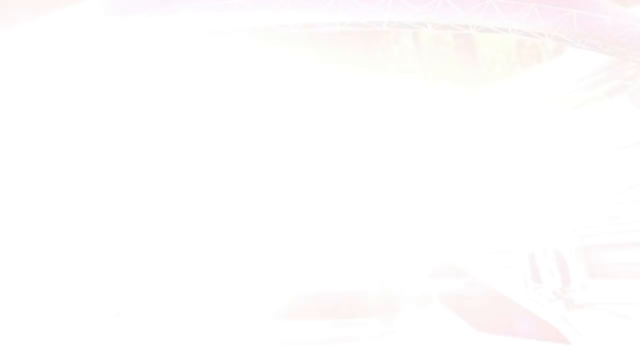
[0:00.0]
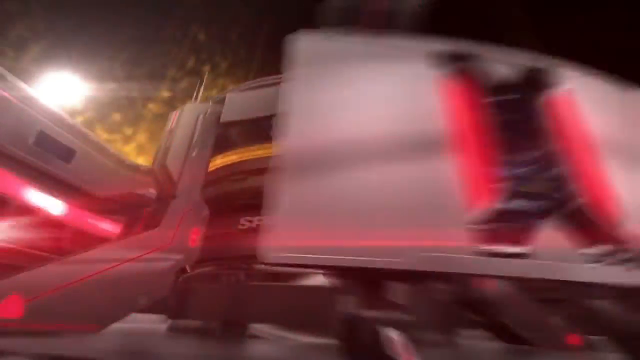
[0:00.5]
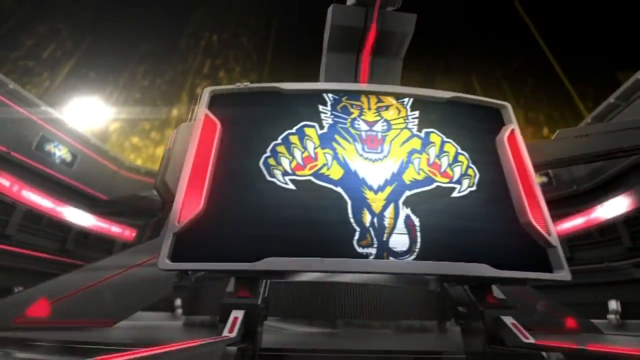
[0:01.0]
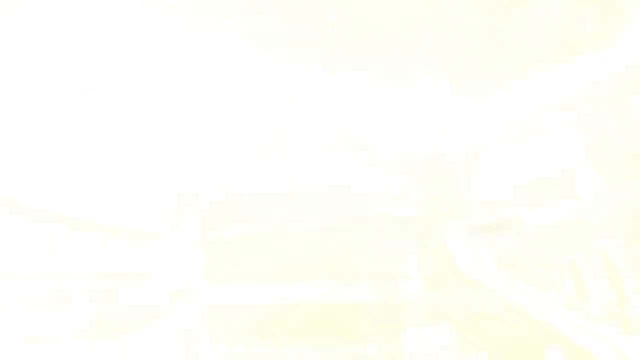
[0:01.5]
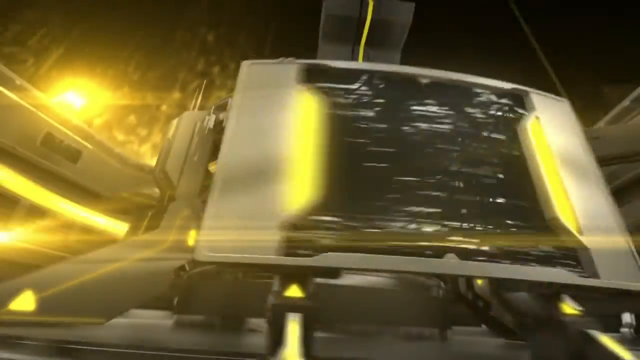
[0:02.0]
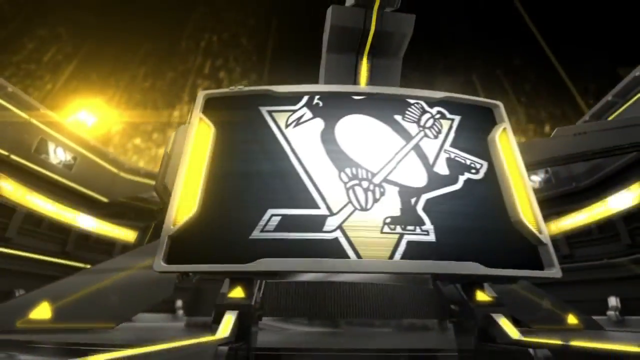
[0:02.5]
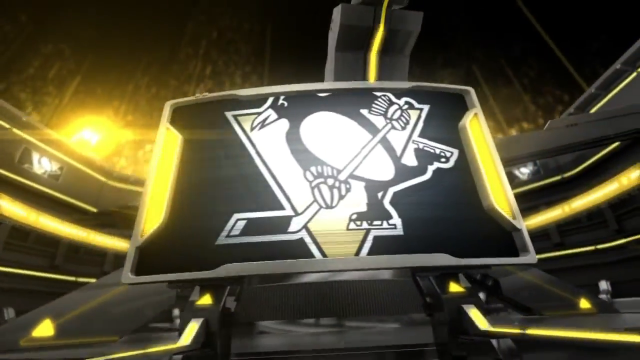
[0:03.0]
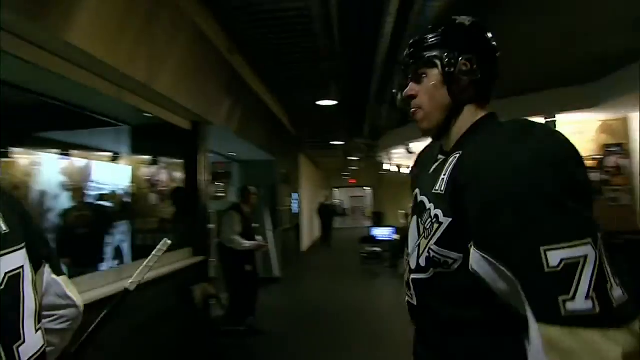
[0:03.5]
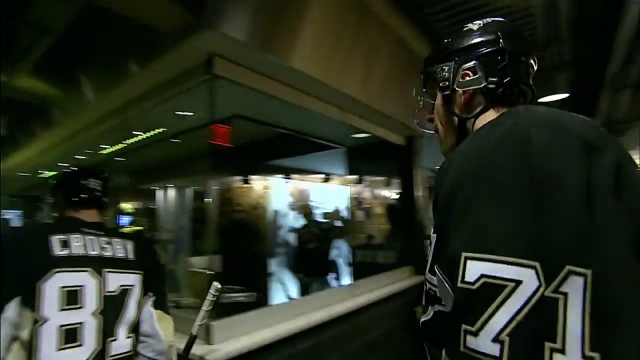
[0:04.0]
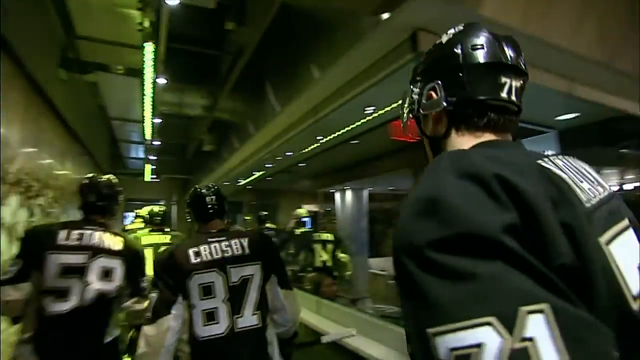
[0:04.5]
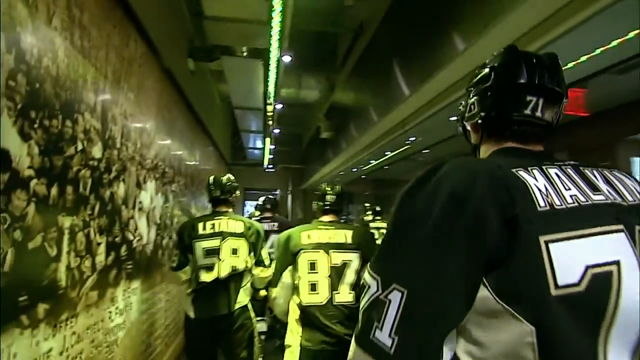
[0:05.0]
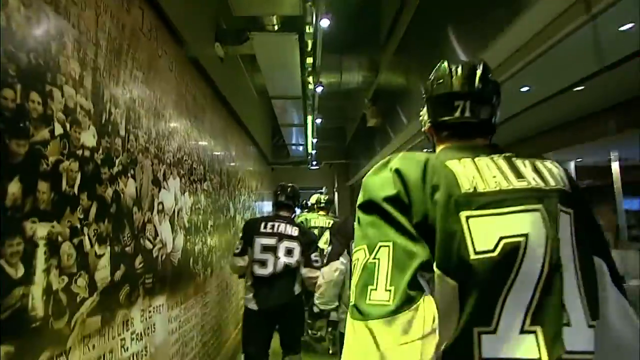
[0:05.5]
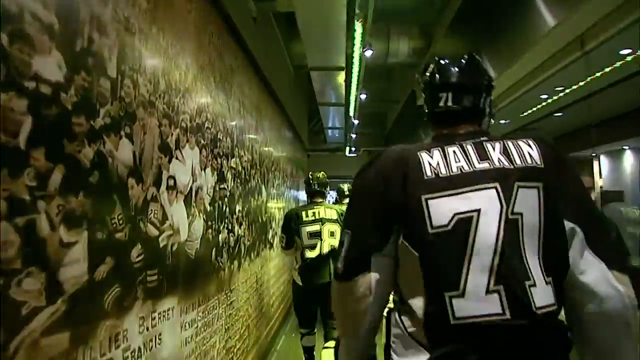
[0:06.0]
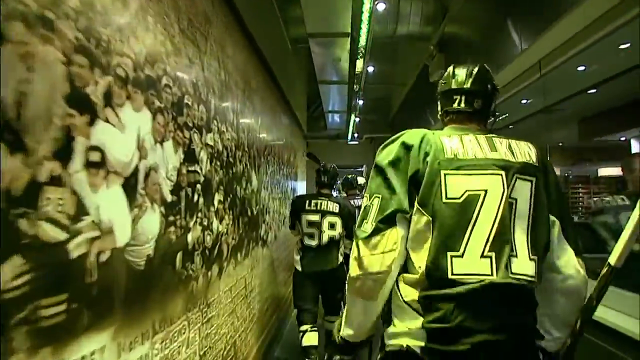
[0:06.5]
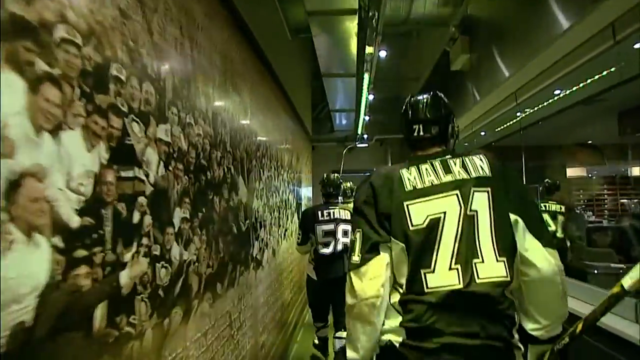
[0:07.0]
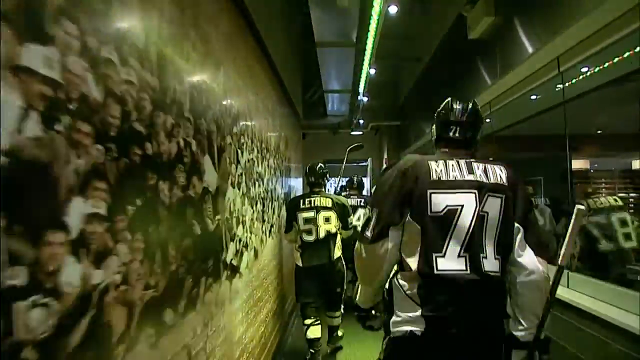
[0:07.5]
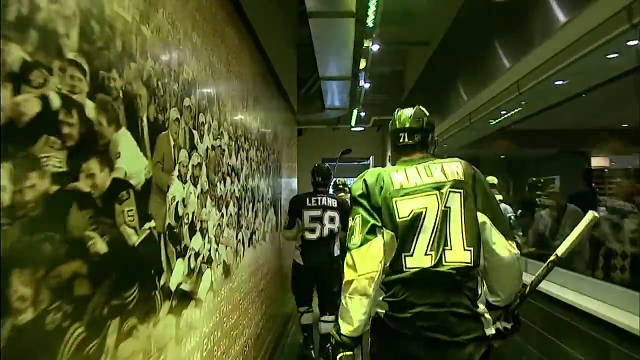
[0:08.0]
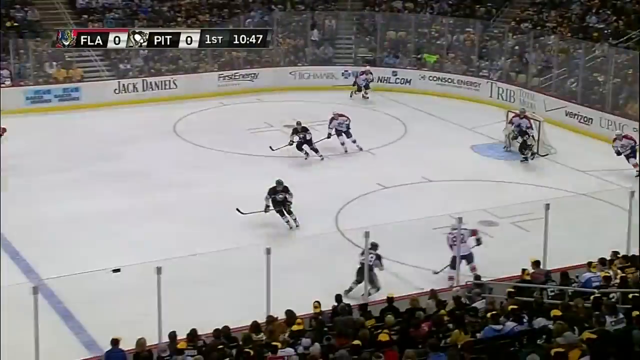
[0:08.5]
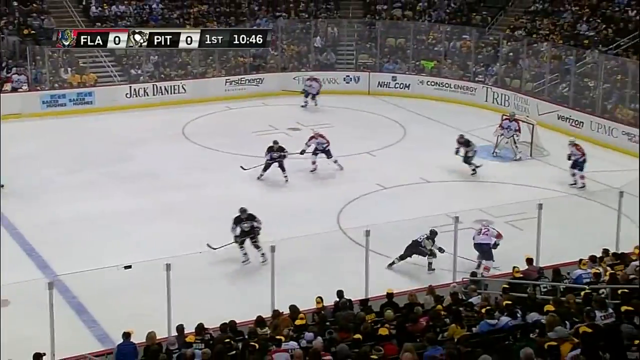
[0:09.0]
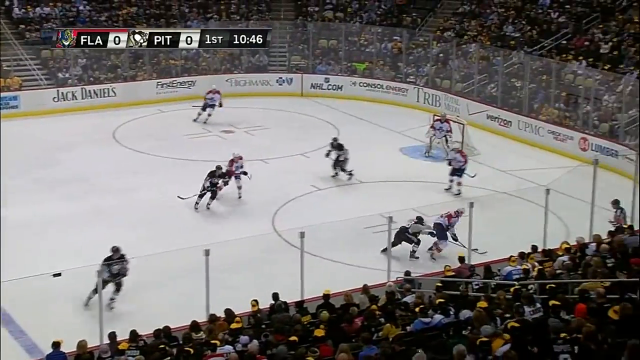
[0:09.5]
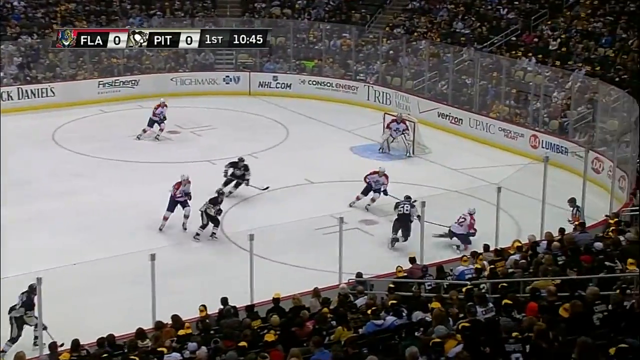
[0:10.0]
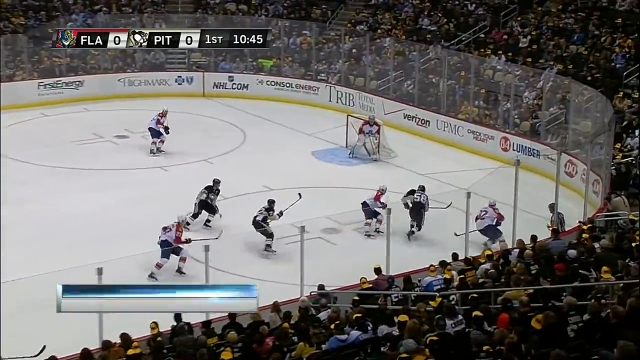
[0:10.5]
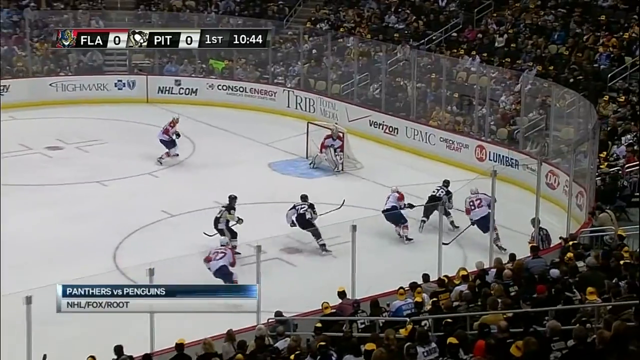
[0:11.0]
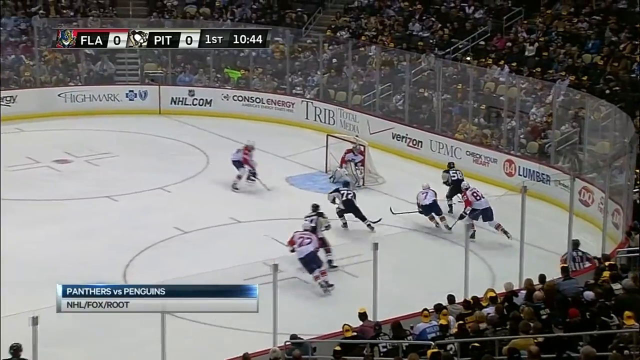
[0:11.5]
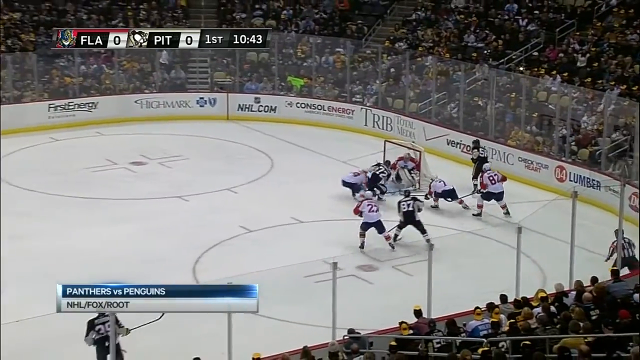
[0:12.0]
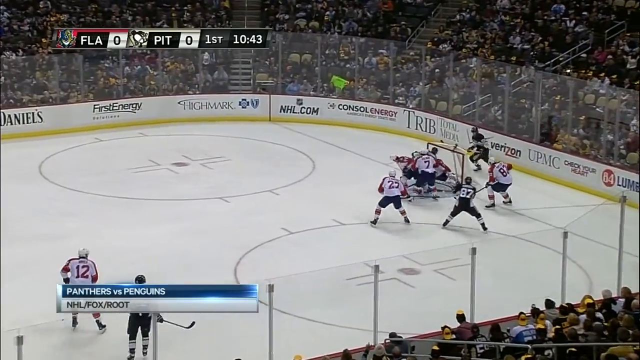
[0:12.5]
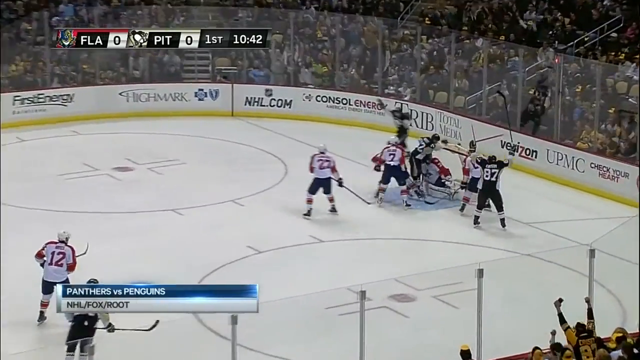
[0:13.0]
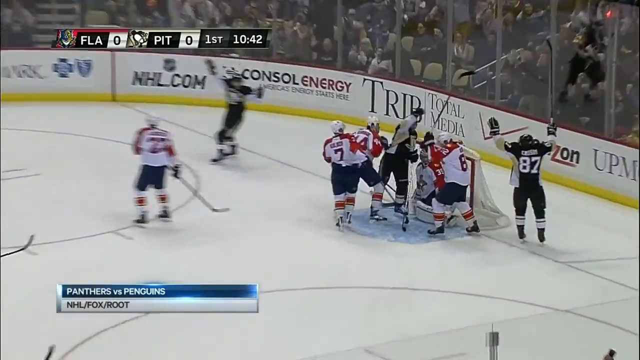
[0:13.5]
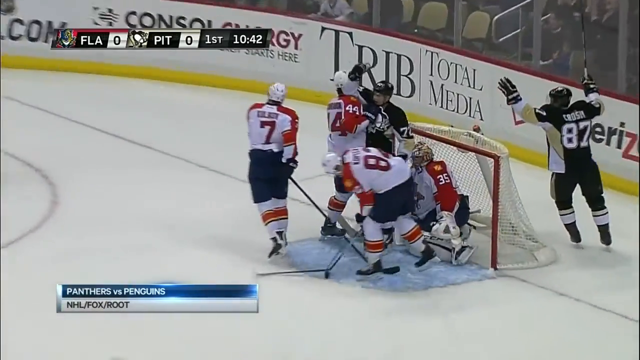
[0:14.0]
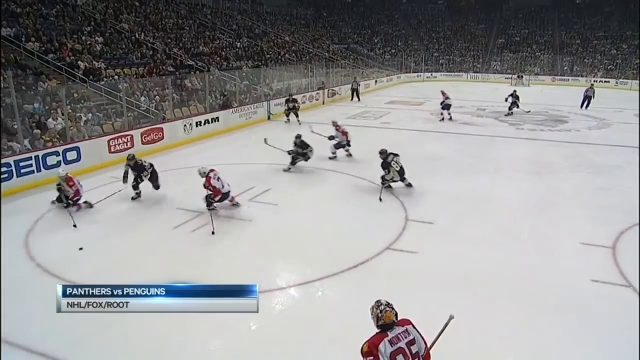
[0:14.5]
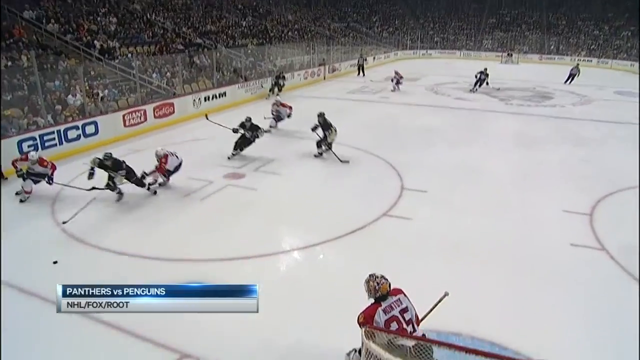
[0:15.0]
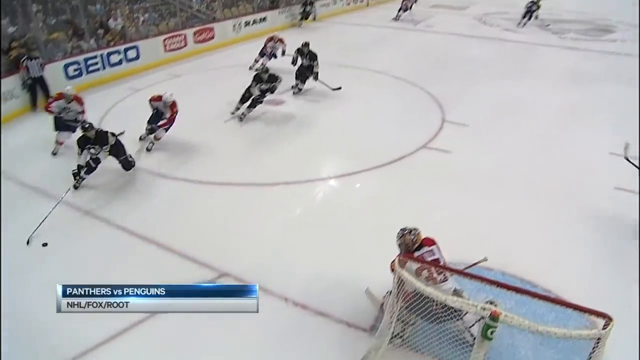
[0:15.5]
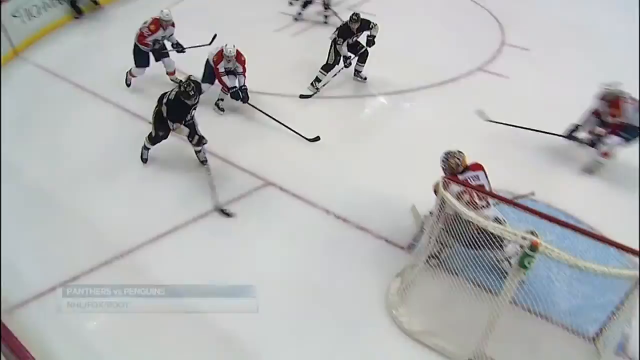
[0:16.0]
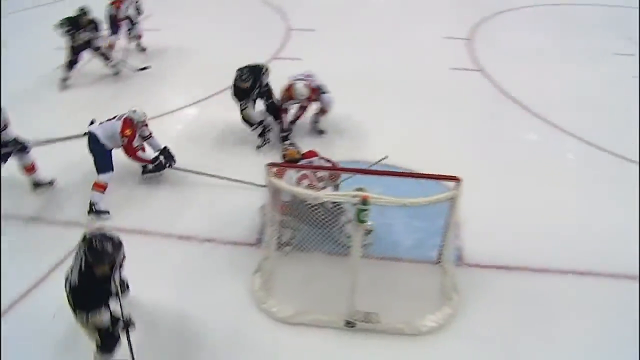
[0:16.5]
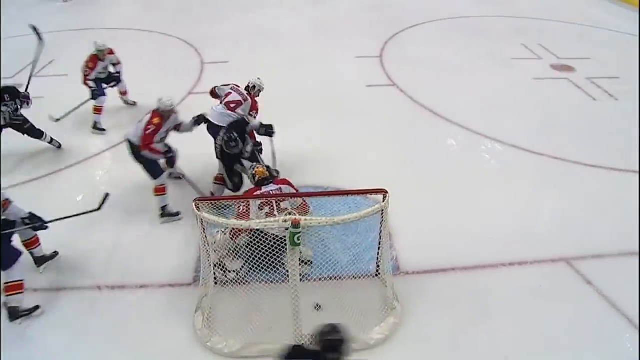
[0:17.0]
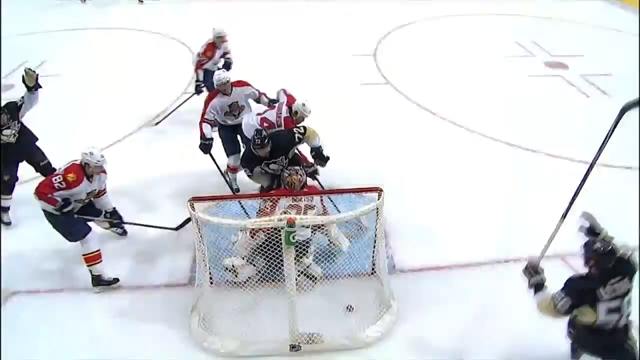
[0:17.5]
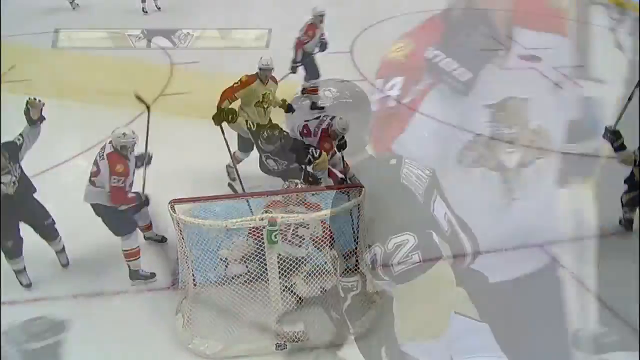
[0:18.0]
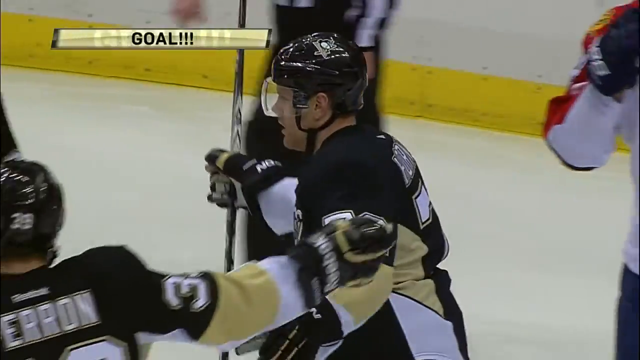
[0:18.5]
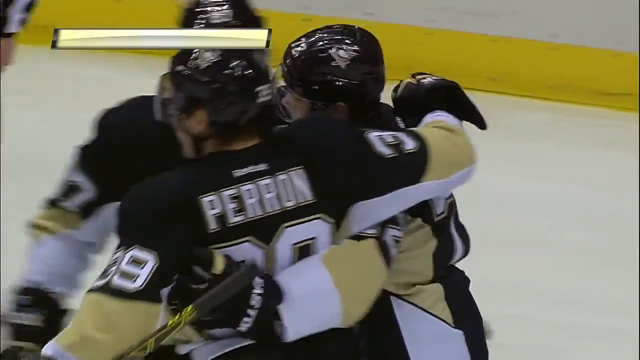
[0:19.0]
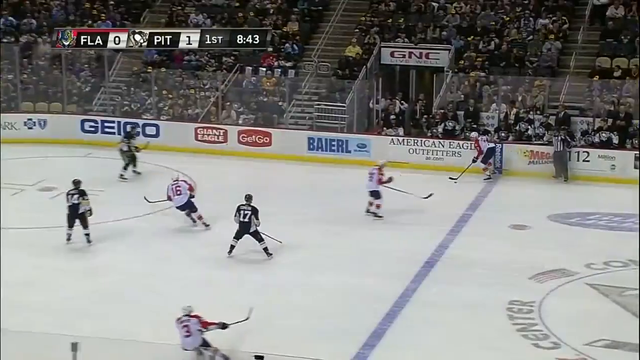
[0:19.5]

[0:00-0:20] A hockey team comes out onto the playing area from their home ground, and the players begin playing hockey, fighting for the ball on a white pitch. One team wears black and white, while the other team wears red, white and black. The gate where they score their goals is also white. The players are men aged between 20 and 30. The other team has just lost a goal to the black team. The ball is inside the ground as everyone fights for it. The ground is marked with circles in black and also in red. The ground is filled with spectators watching and cheering for their favourite team, and many people in the background are wearing black and cheering at the game.